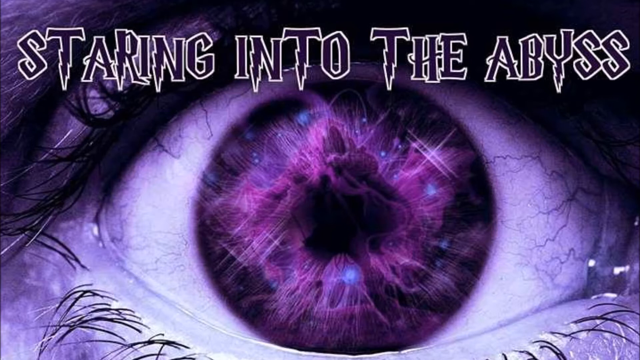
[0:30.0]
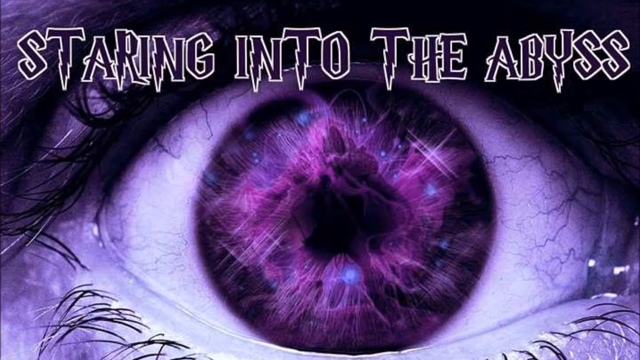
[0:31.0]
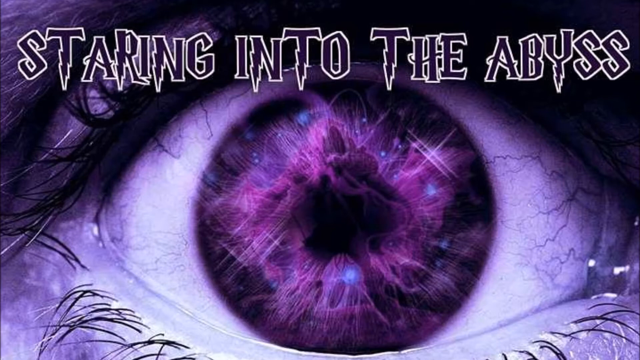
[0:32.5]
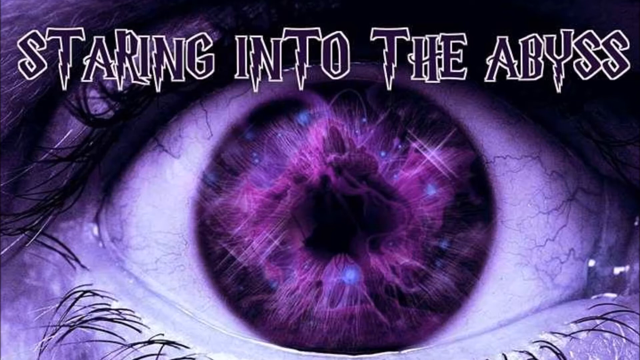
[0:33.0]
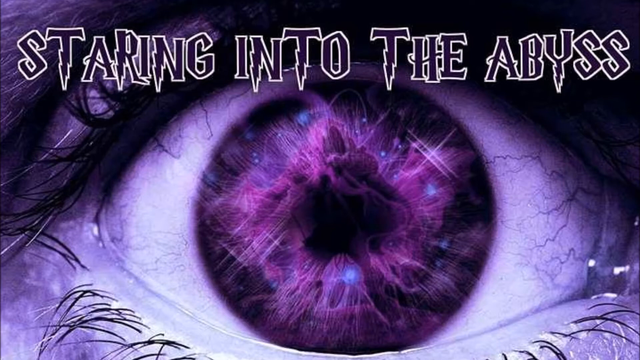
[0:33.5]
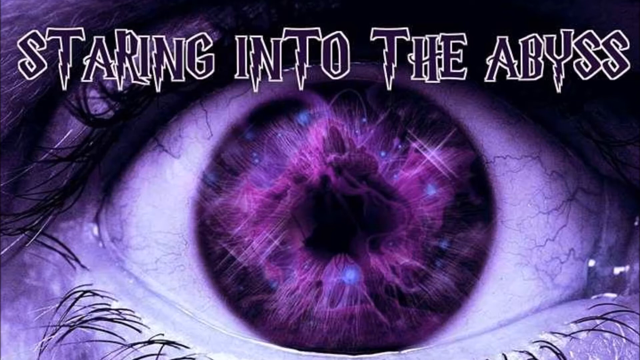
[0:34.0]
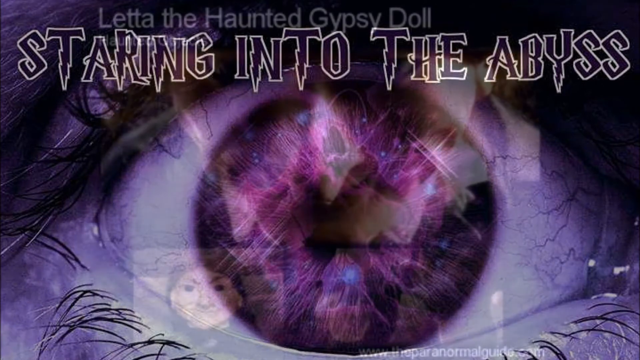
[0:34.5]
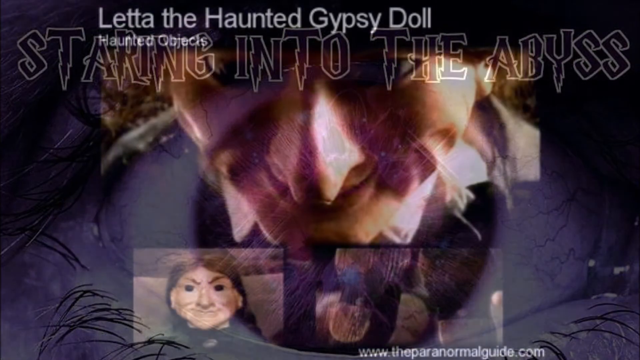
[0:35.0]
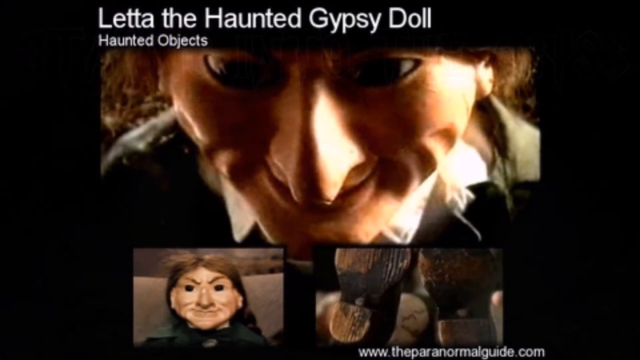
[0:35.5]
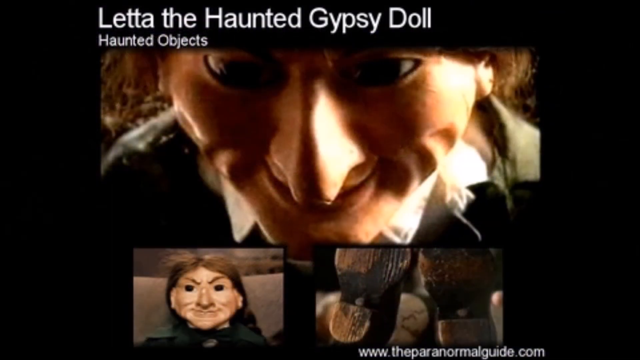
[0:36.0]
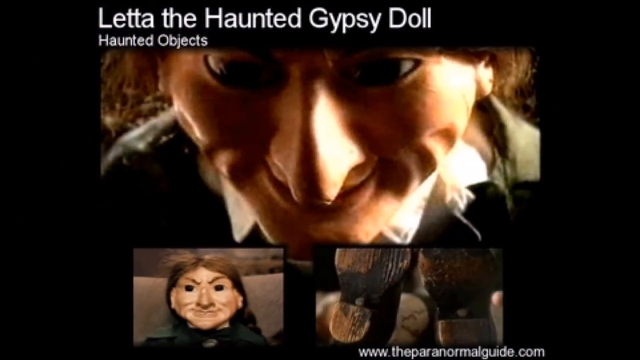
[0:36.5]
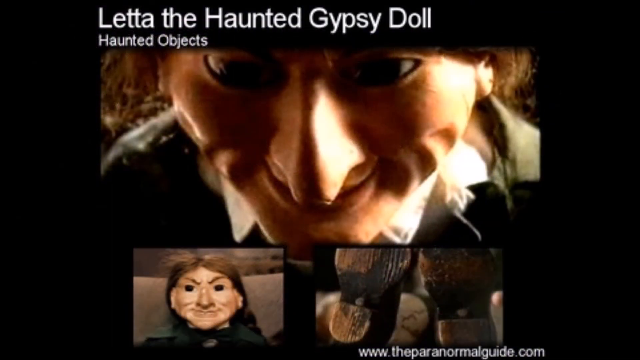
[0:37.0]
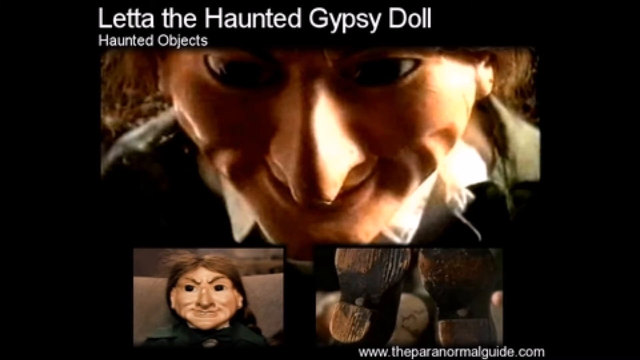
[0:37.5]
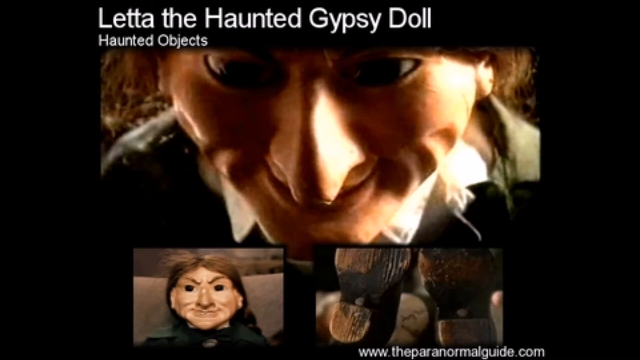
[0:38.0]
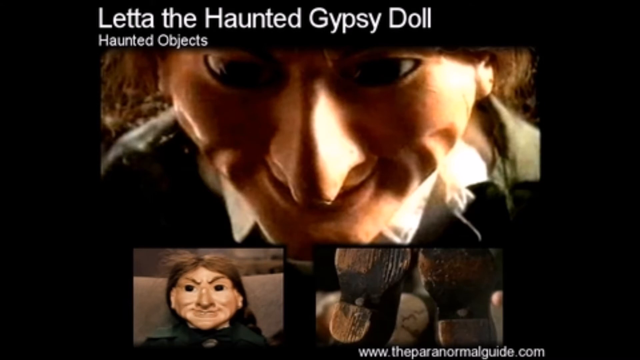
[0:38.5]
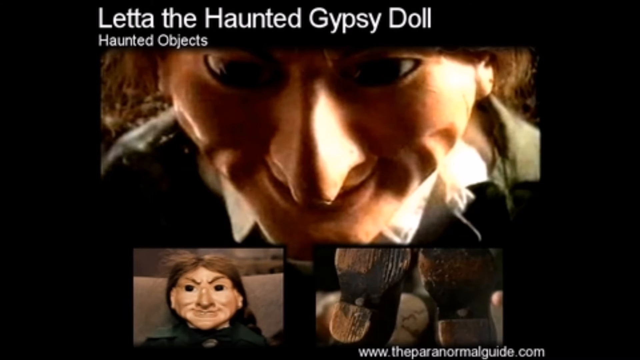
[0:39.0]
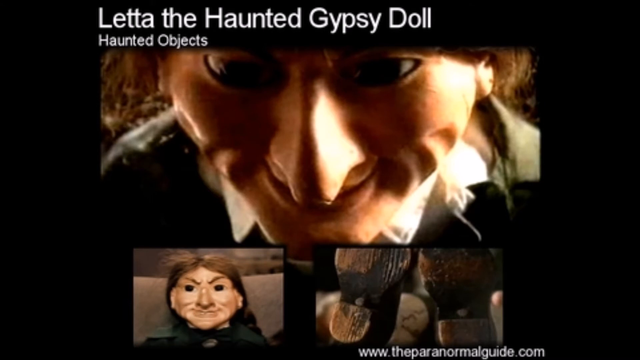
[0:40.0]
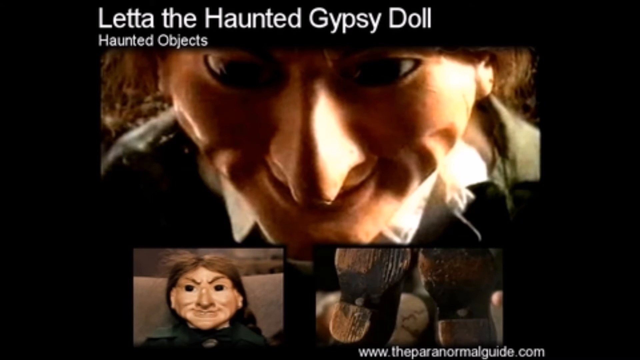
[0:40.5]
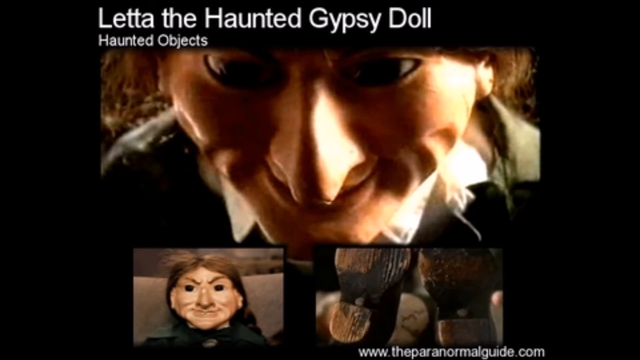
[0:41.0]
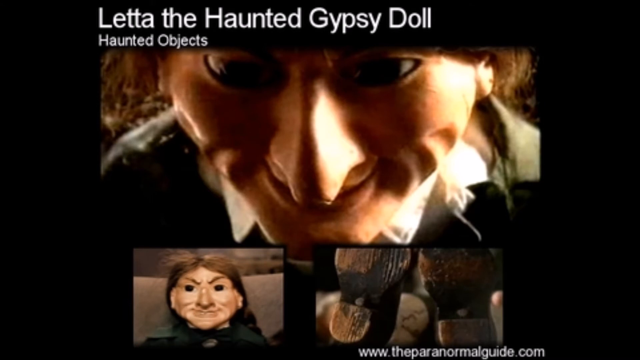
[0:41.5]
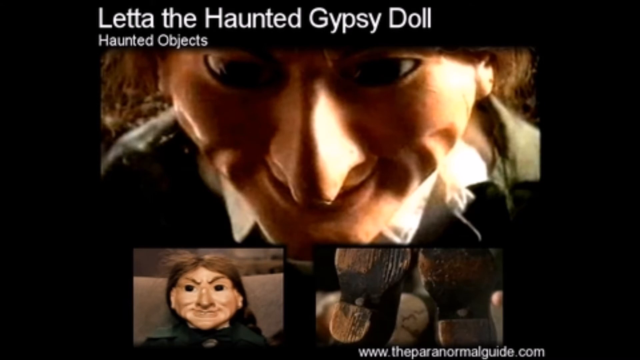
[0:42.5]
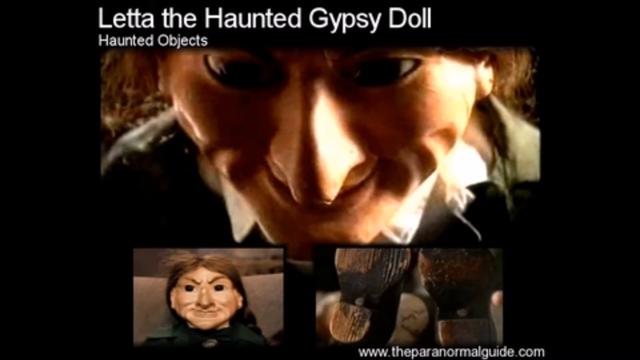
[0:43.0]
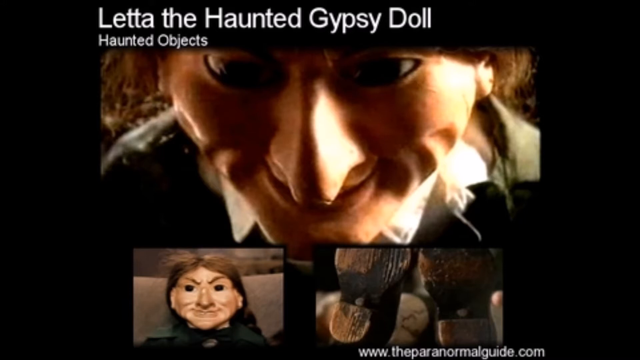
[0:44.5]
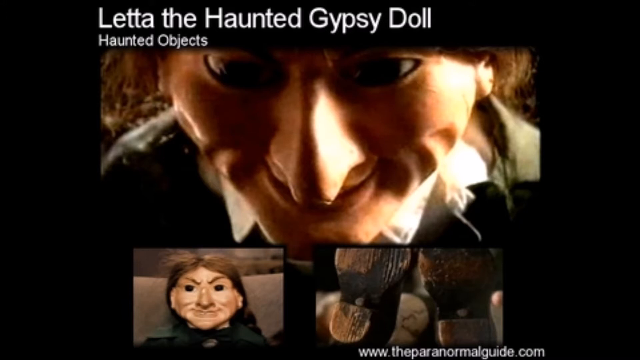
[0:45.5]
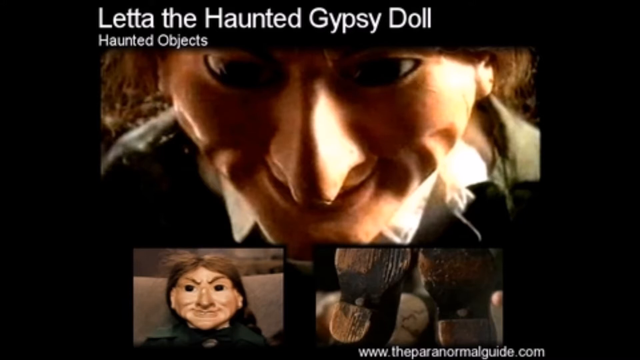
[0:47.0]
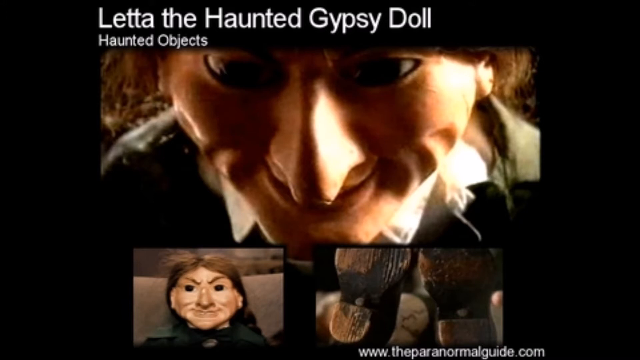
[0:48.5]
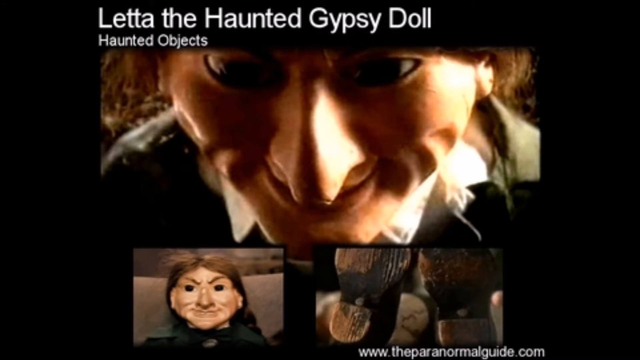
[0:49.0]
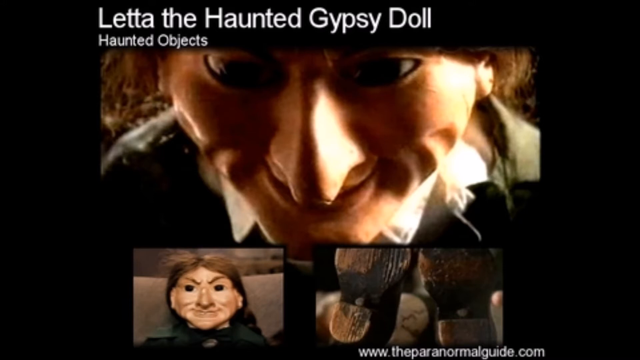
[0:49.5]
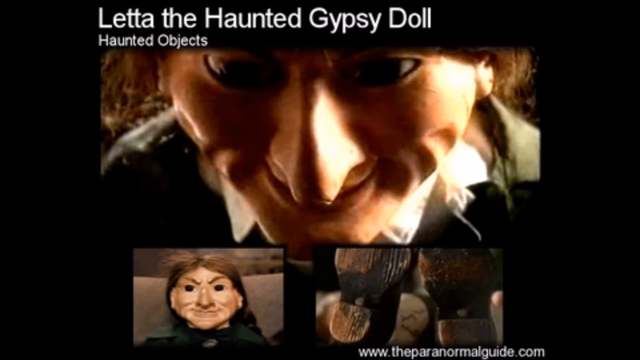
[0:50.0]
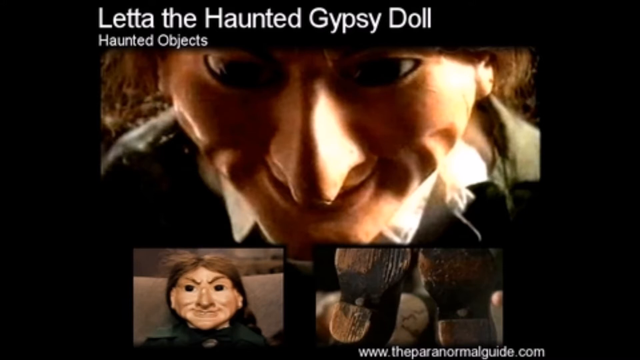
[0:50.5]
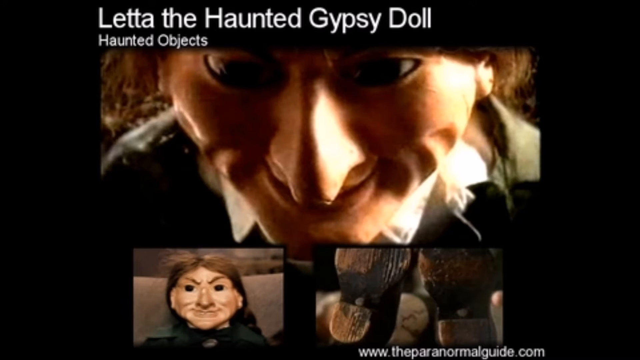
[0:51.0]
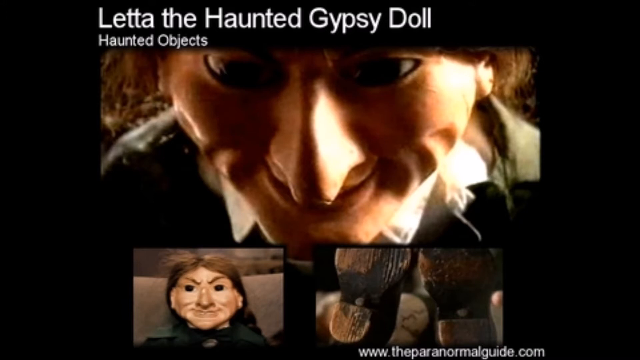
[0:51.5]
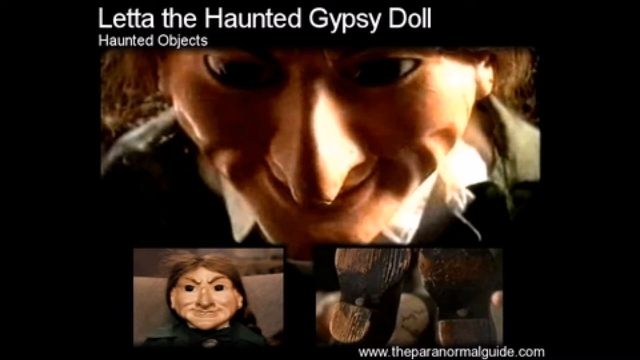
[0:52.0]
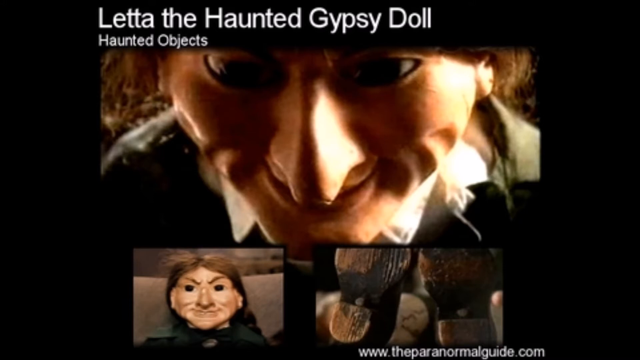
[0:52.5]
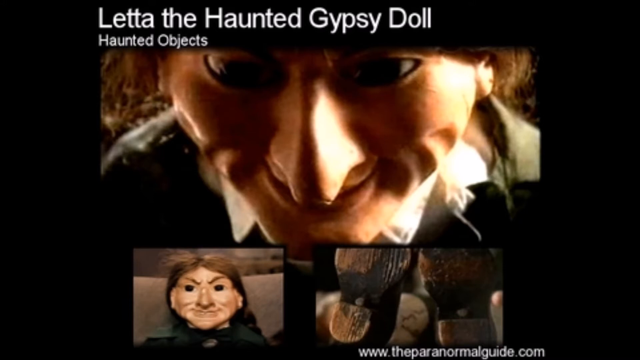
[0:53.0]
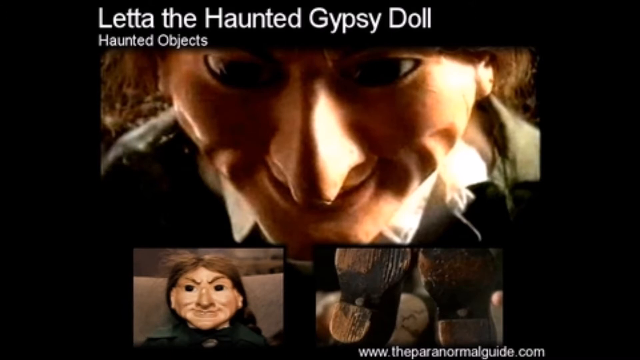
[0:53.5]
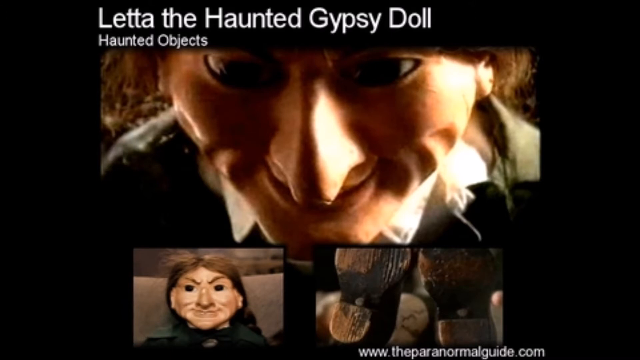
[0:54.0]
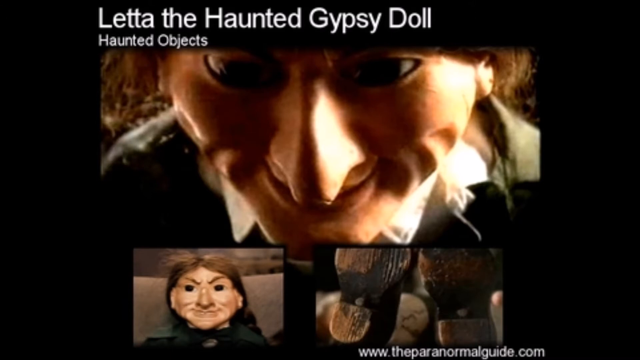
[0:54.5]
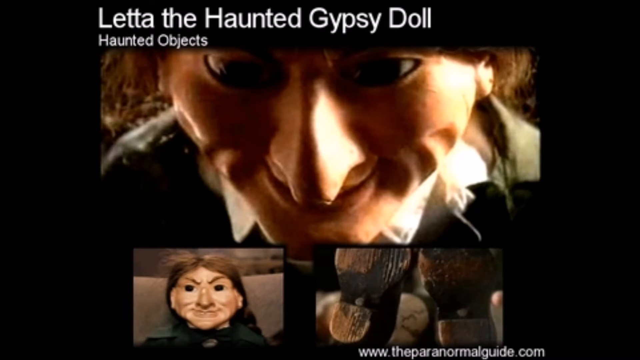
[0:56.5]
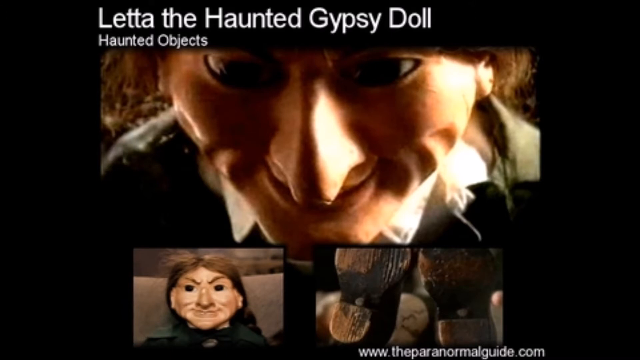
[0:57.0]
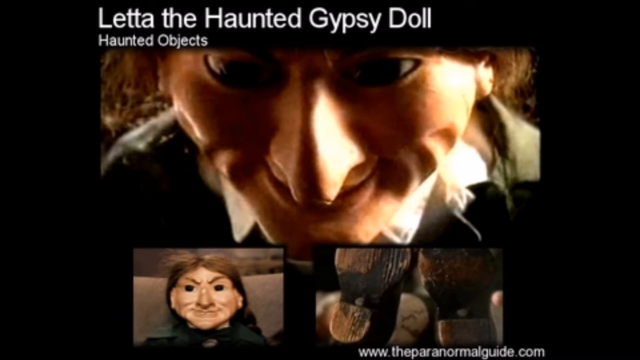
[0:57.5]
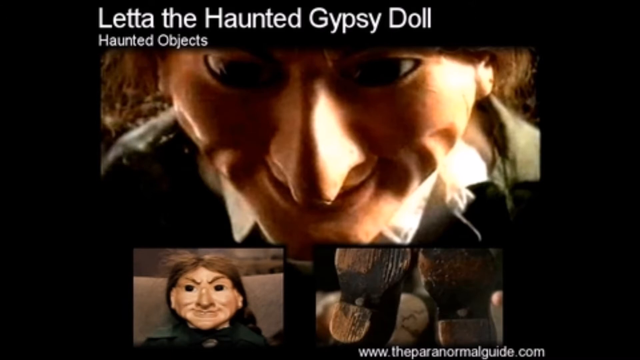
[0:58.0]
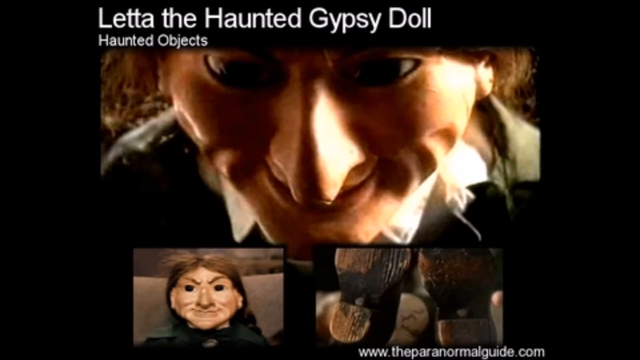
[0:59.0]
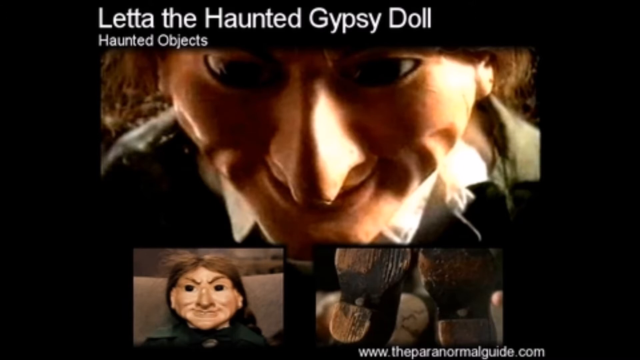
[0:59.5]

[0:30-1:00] The text "staring into the abyss" is shown. In the middle is the purple eye, with blue spheres containing some kind of purple monster. Around the eye is the black emptiness of a galaxy; the eye has black eyebrows and white inside it. Next comes text about a haunted gypsy doll and haunted objects, with a creepy description of a doll. At the top is a picture of the doll taken from above: it has a sharp nose, big black eyes, dimples on its cheeks, a sharp chin and brown hair. At the bottom left is a straight-on view of the face with all the same features, and at the right are pictures of the bottom parts of shoes.